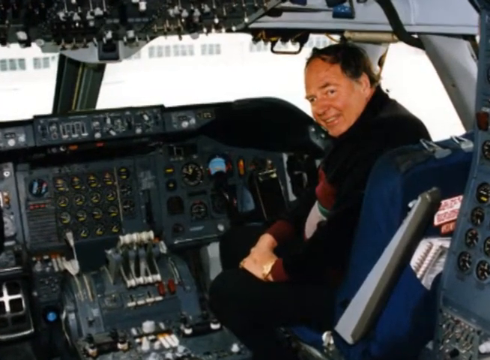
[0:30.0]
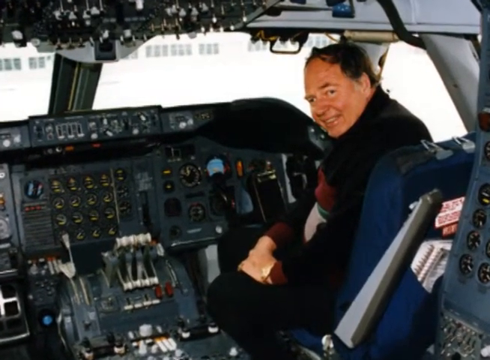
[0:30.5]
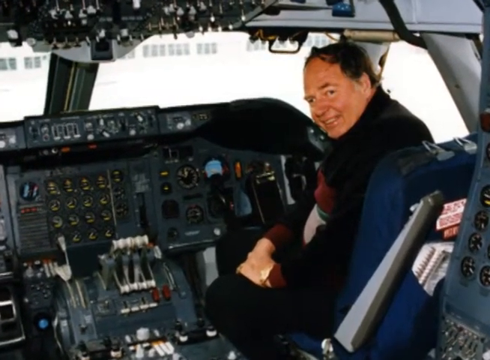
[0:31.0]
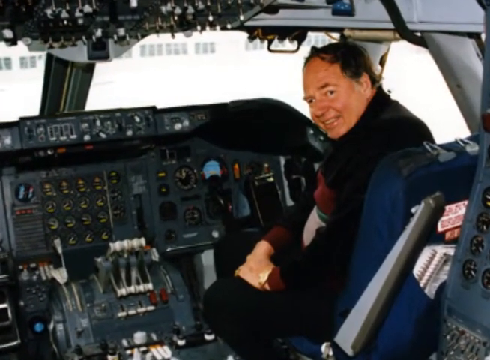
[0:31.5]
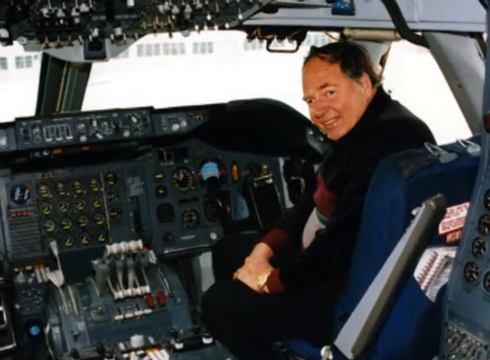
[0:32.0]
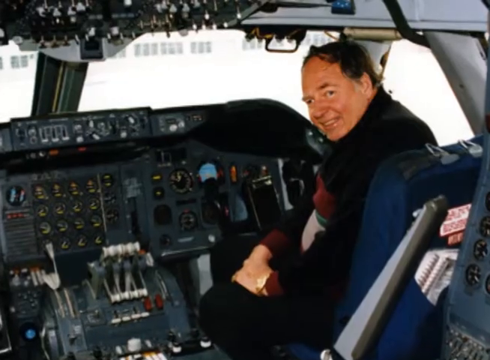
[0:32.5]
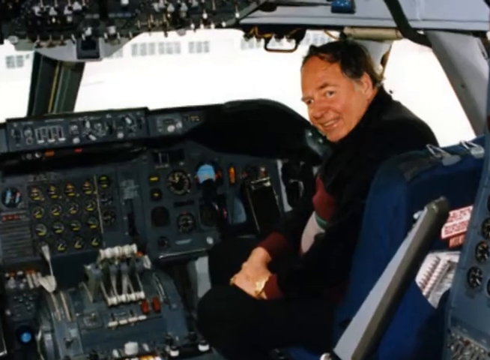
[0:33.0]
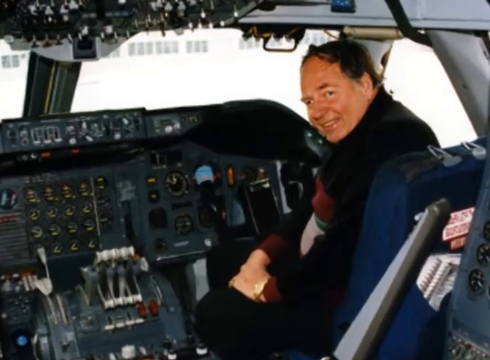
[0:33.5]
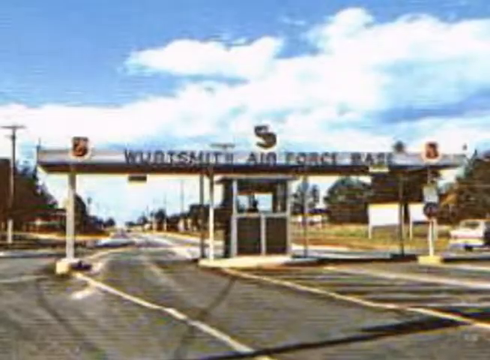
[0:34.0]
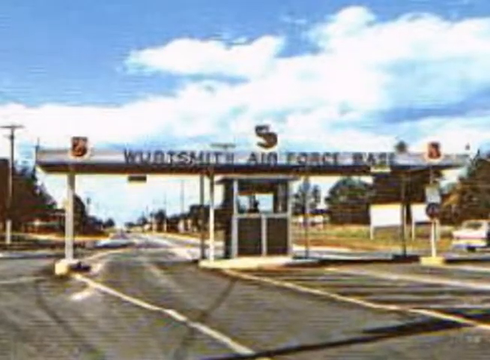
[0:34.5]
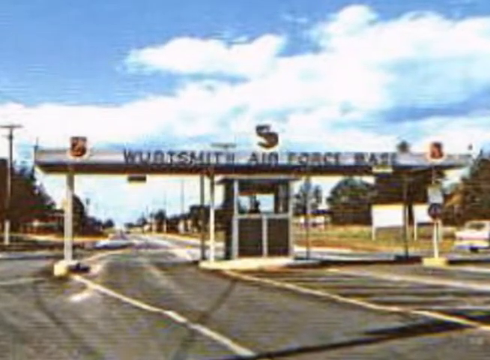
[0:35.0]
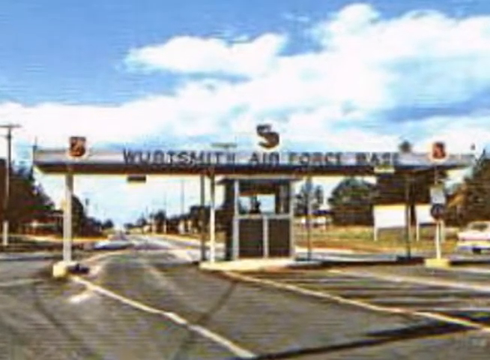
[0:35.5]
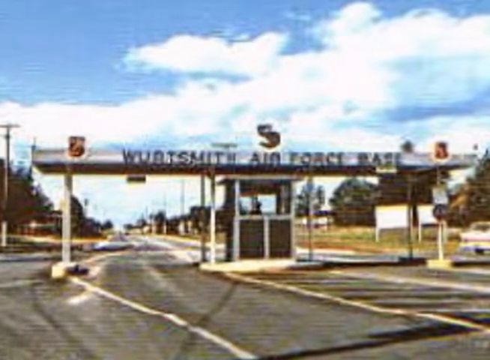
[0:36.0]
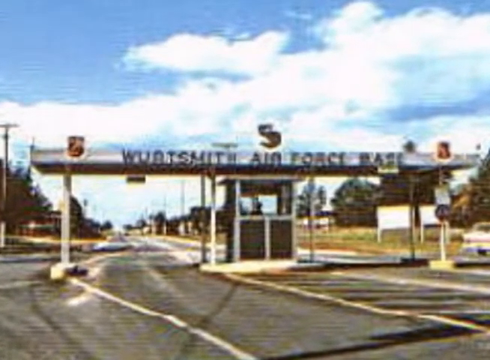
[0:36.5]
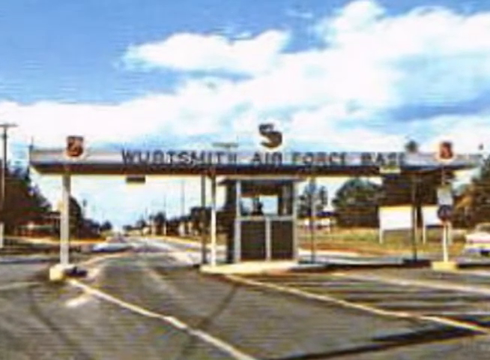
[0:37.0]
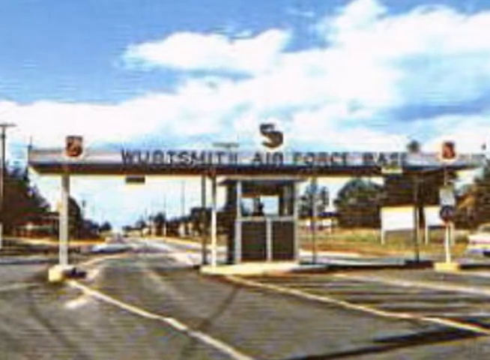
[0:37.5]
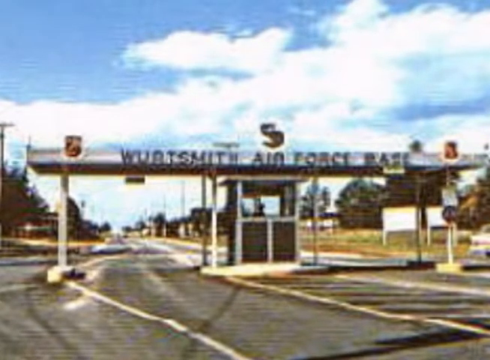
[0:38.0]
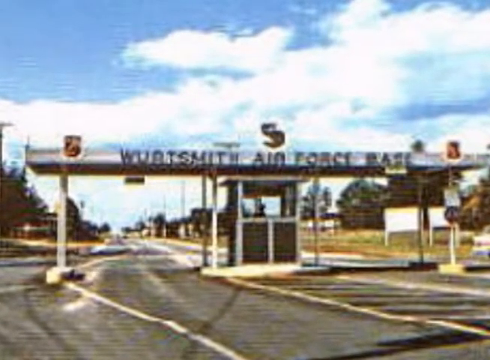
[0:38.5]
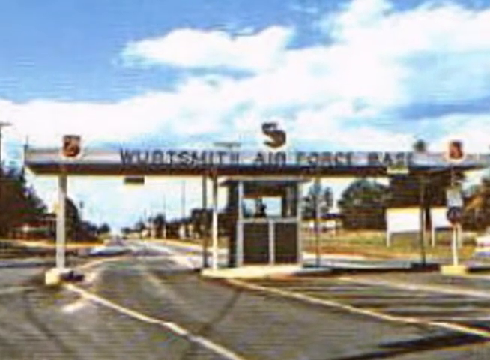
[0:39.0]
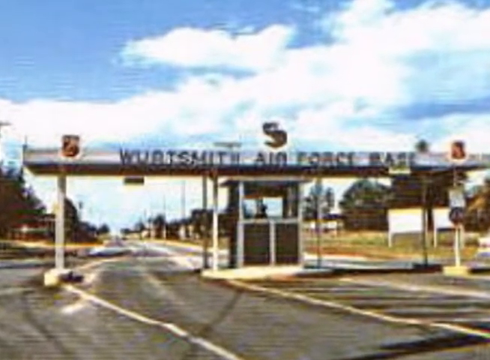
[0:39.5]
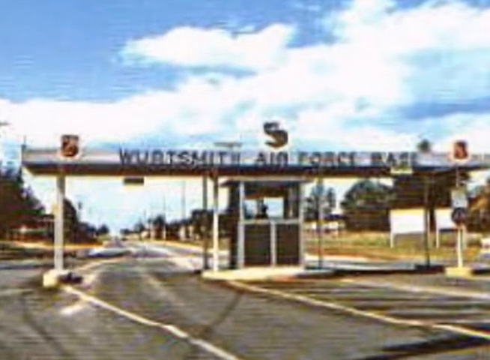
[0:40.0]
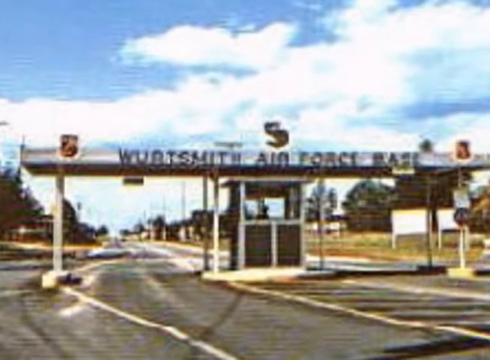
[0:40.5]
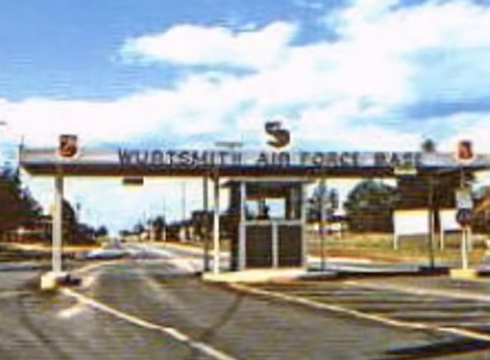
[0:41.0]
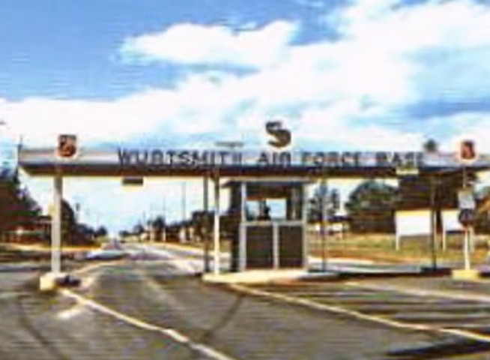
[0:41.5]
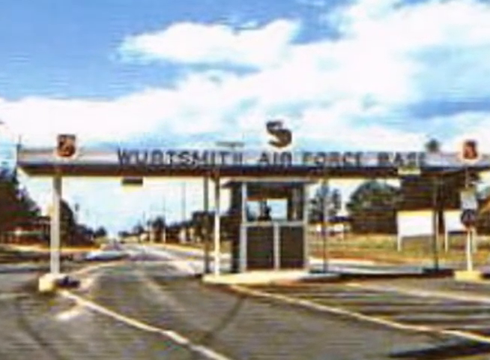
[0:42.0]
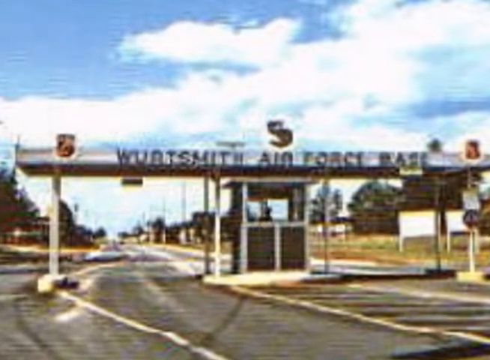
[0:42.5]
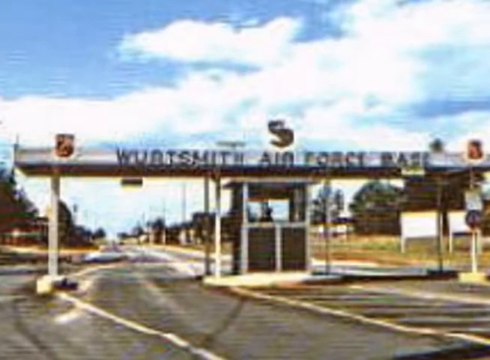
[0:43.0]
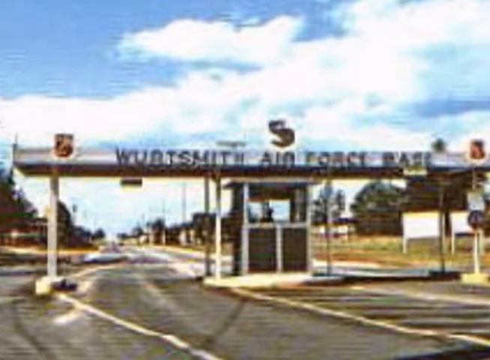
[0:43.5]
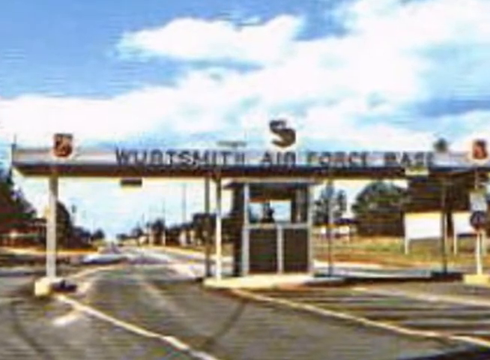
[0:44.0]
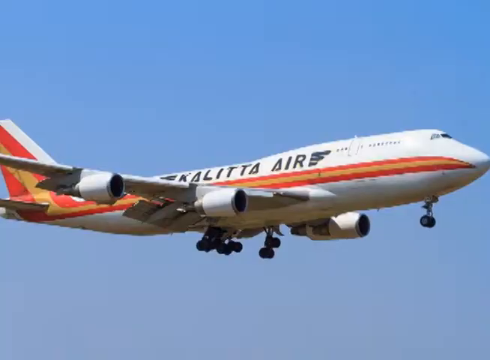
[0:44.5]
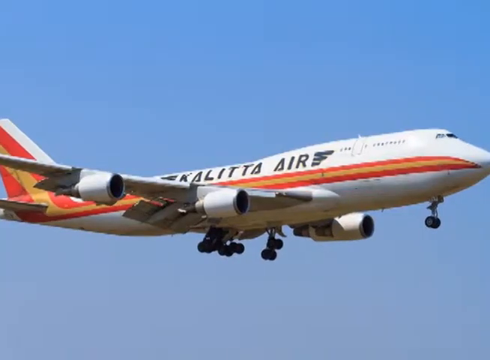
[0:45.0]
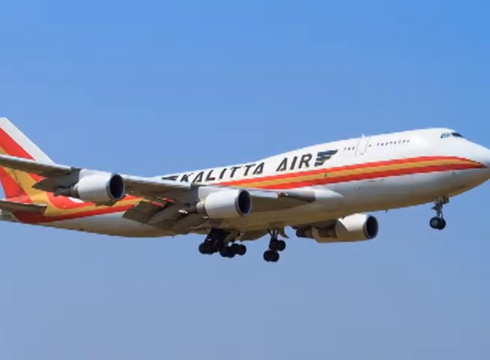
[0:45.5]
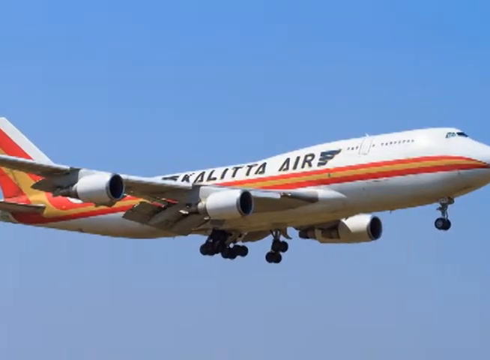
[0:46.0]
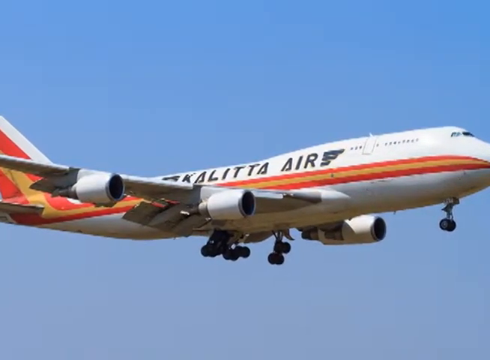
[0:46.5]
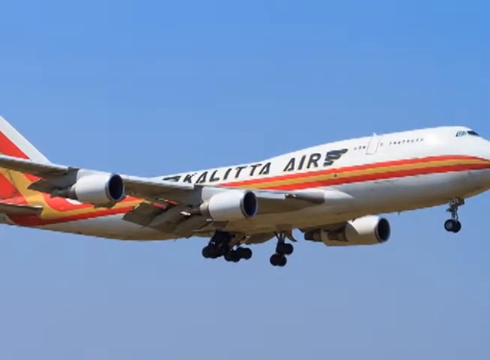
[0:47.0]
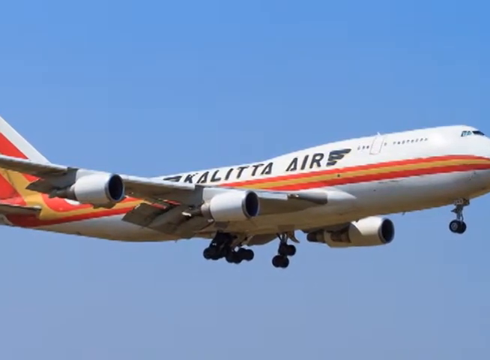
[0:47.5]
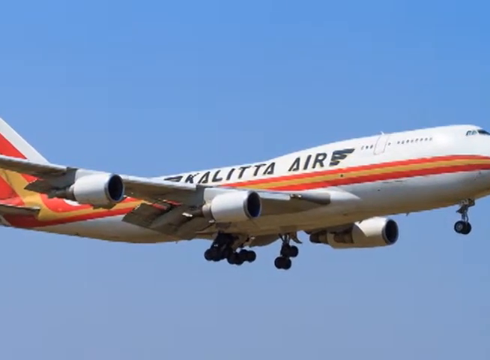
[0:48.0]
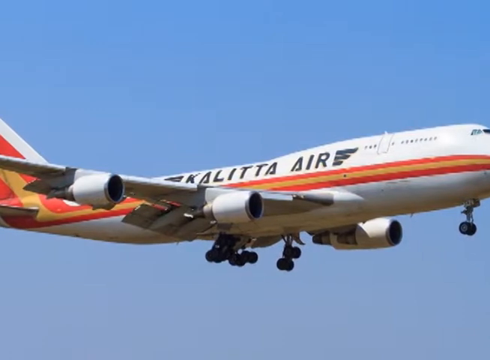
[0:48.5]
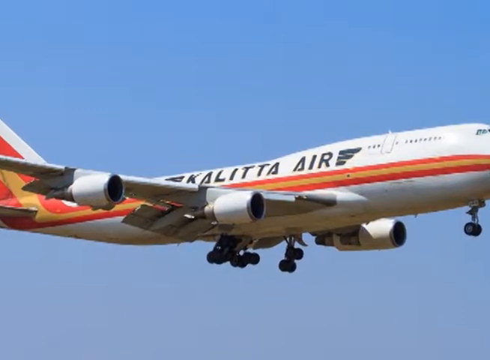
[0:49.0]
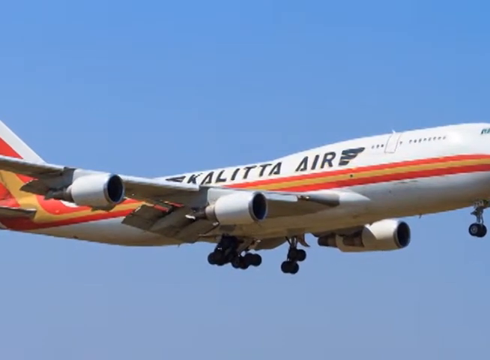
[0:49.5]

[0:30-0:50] Inside the cockpit of an airplane that looks like a jumbo jet, one man sits in the right seat in front of the instrument panel. Its windshields and levers are visible, and he sits sideways, looking back at the person taking the photograph. The video transitions to a grainy photograph that looks like it is from the late 60s or early 70s, showing the entrance to an Air Force base. The name is hard to make out but looks like Wurtsmith. The entrance has a top, posts, and a middle section for a watchperson, like a toll booth. It is a sunny day, and there is a road to enter and a road to exit. The video then transitions to a sunny day with clear skies and a jumbo jet in flight. Its fuselage is white with two red stripes and an orange stripe between them, and it appears to read "Kalitta Air". Its landing gear is on the way down, so the jet appears to be about to land.